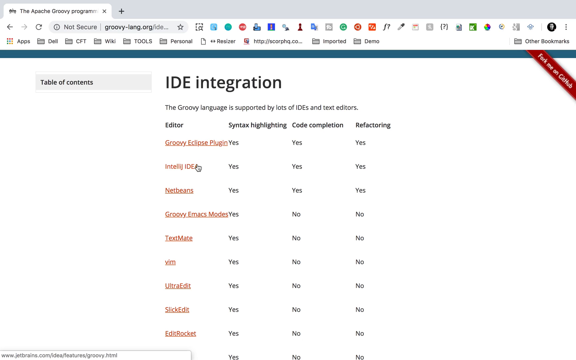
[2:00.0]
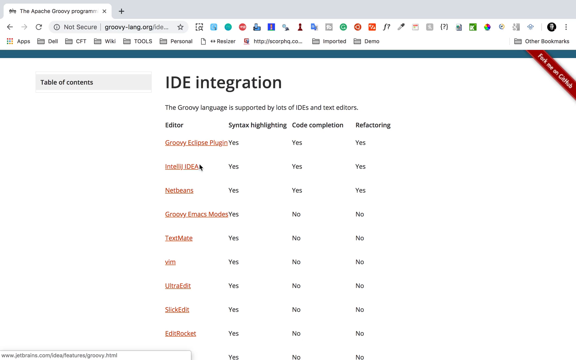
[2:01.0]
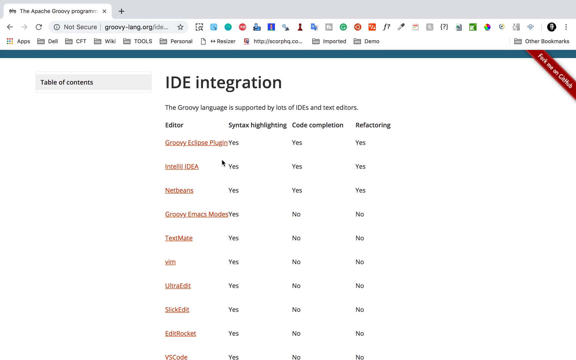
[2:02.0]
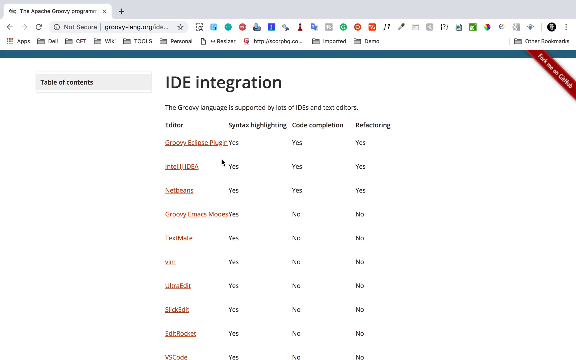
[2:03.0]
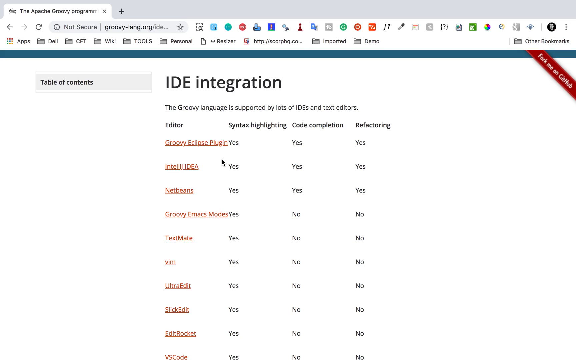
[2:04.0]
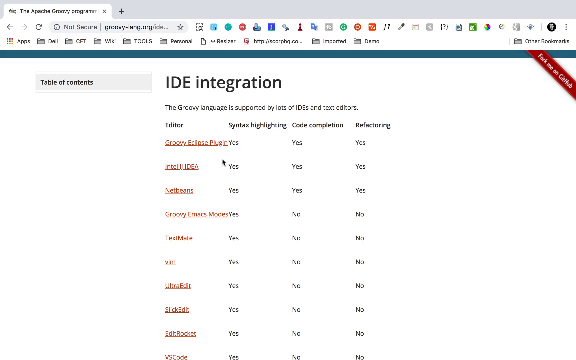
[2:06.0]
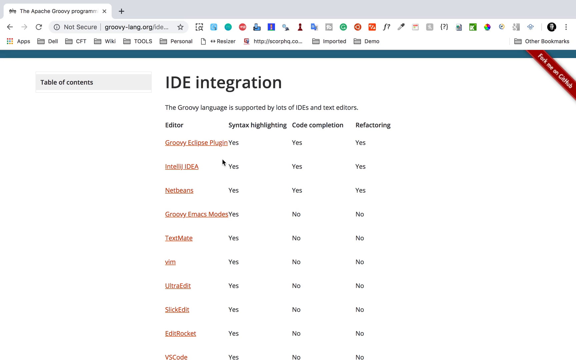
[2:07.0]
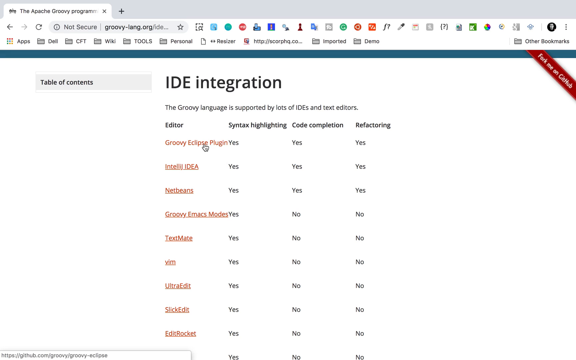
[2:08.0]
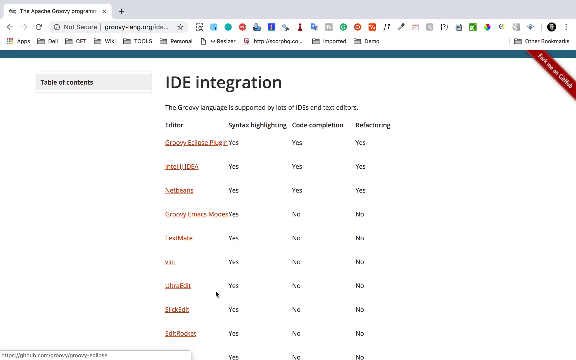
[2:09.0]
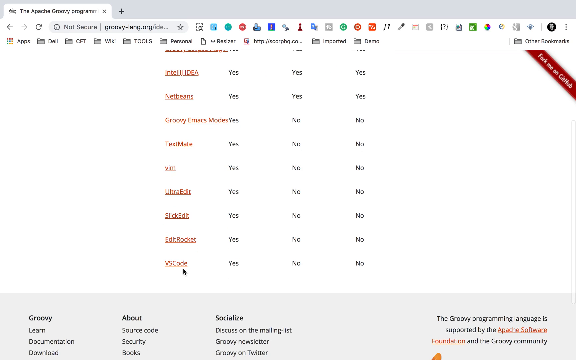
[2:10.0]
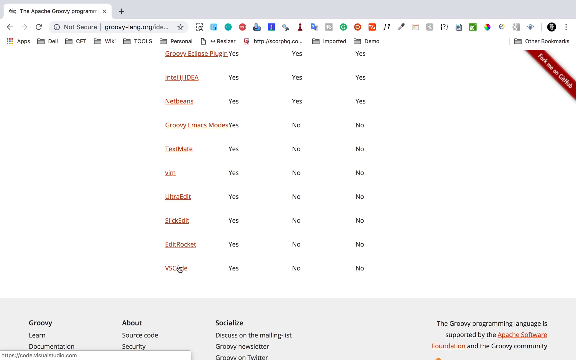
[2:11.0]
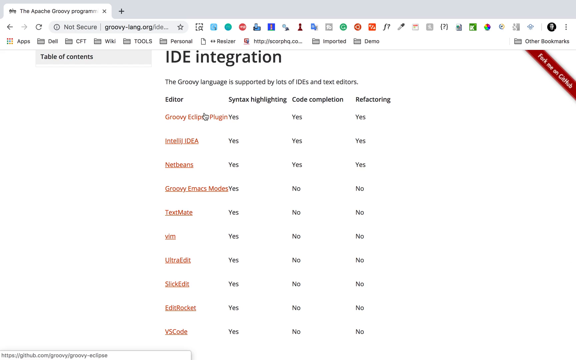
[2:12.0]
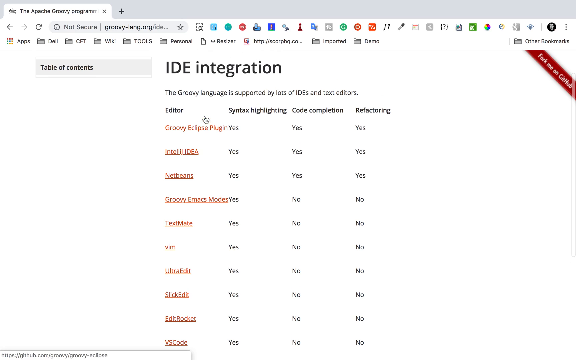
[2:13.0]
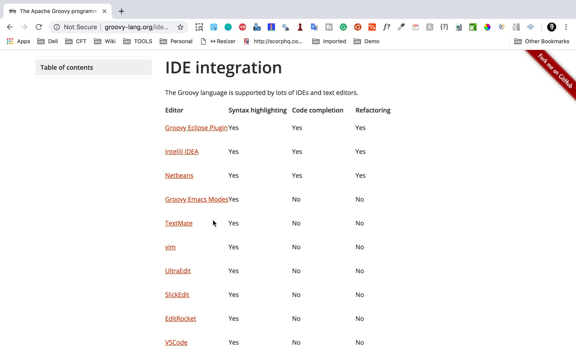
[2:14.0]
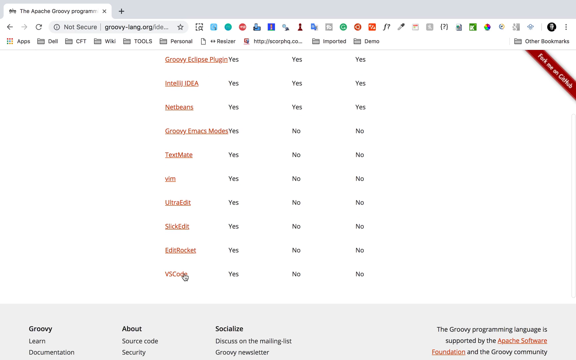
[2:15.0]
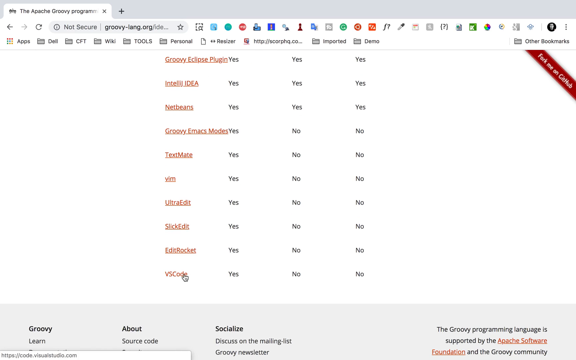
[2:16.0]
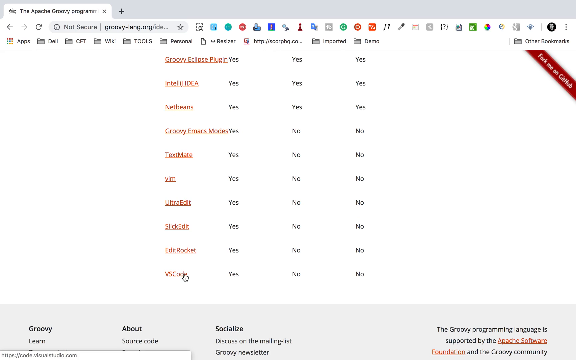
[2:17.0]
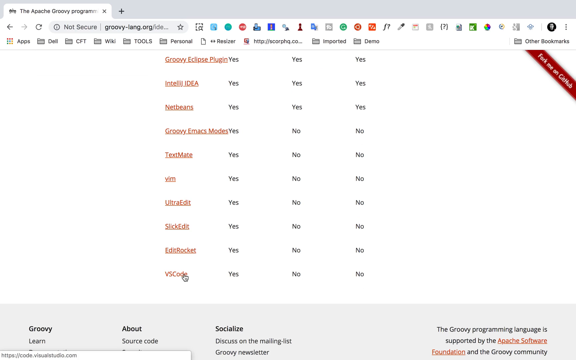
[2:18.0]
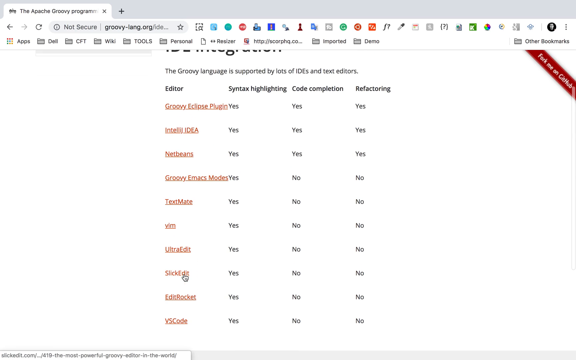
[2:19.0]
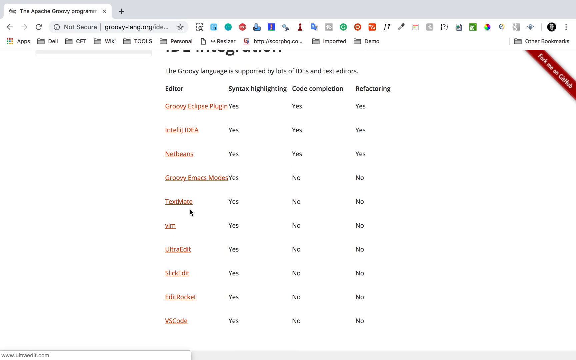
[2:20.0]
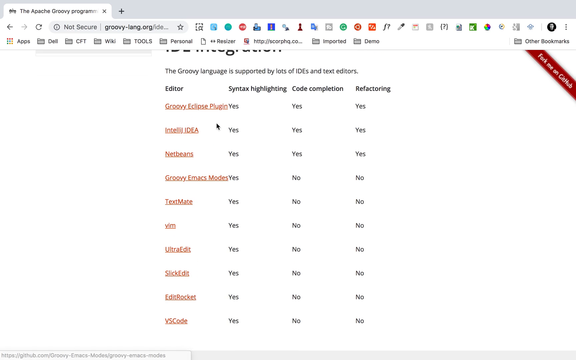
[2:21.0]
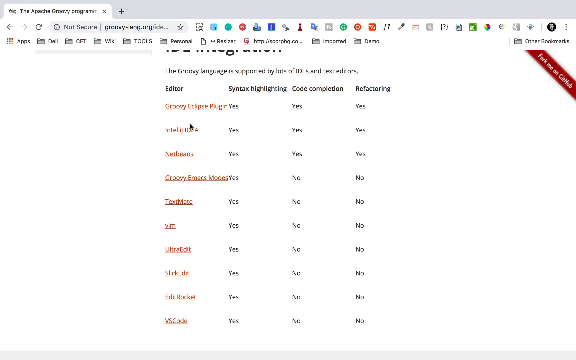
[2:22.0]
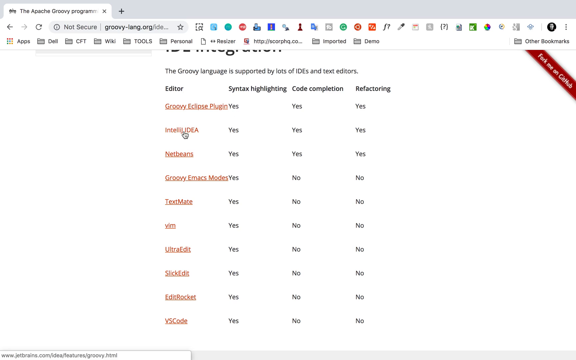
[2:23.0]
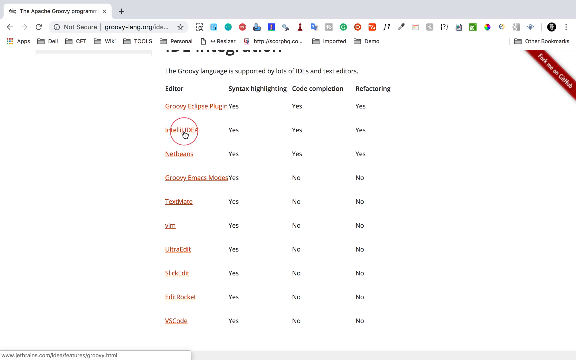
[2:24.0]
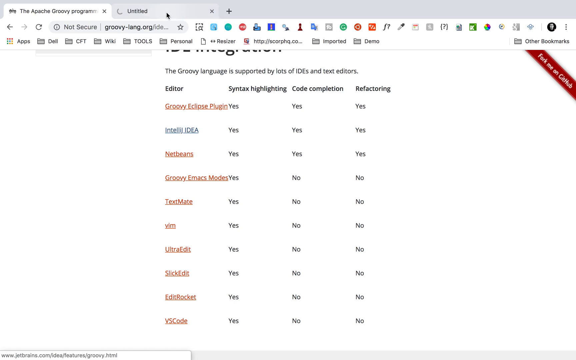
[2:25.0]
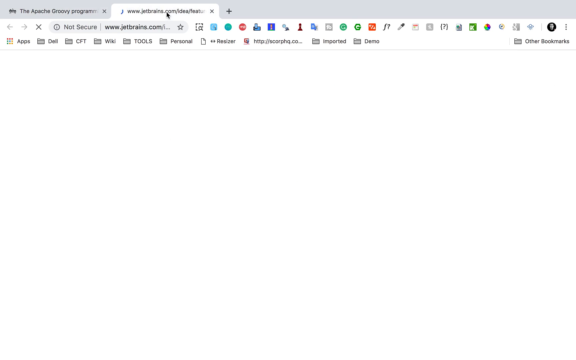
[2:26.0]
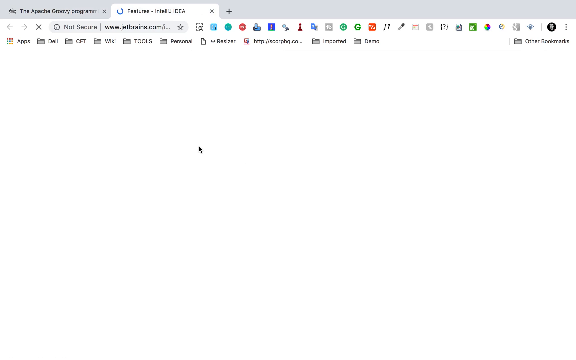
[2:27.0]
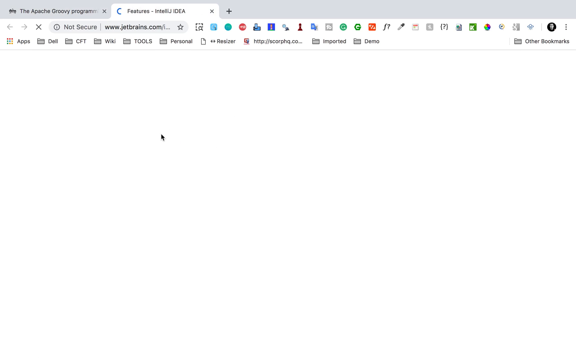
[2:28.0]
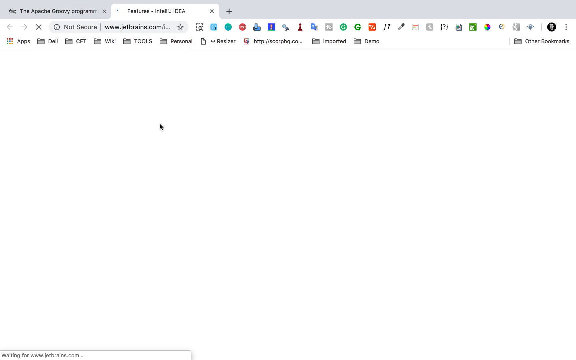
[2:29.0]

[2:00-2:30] A PC monitor shows the Apache Groovy web page at its Table of Contents for IDE integration, with the text "The Groovy language is supported by lots of IDEs and text editors". Nine editors are visible, along with whether they include syntax highlighting, code completion and/or refactoring. A cursor moves around the page, passing over a few of the editors without clicking, then clicks on Features, which brings up another page for editors. At the top of the browser is a toolbar with several shortcuts and a profile photo of the PC's owner, with tabs for multiple apps below and a tab for other bookmarks to the right.